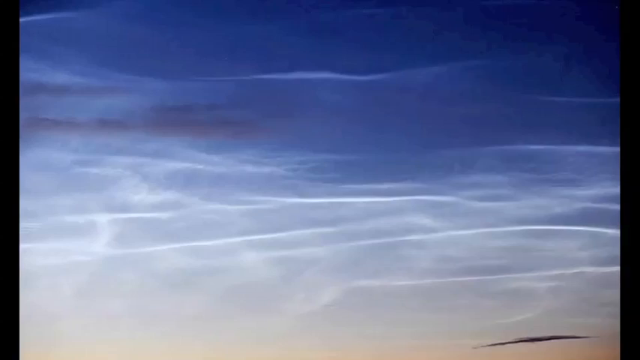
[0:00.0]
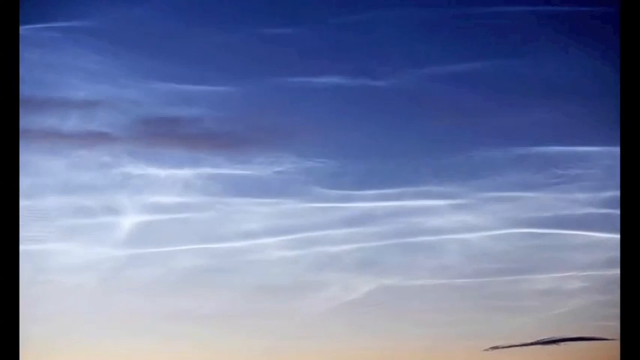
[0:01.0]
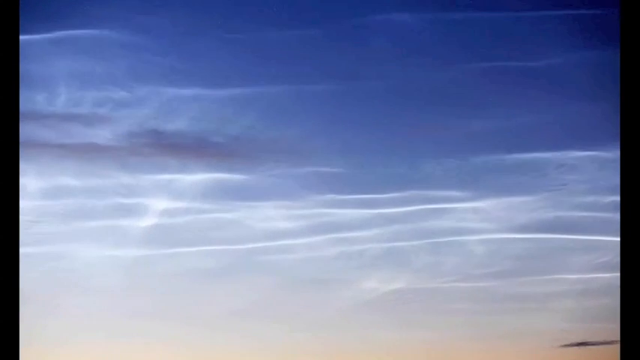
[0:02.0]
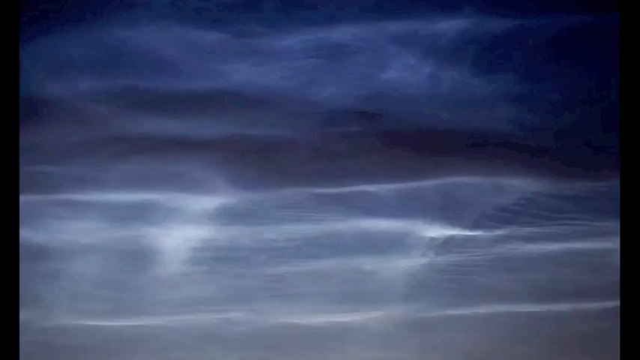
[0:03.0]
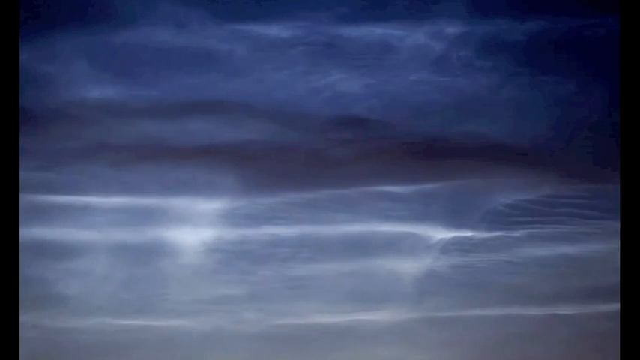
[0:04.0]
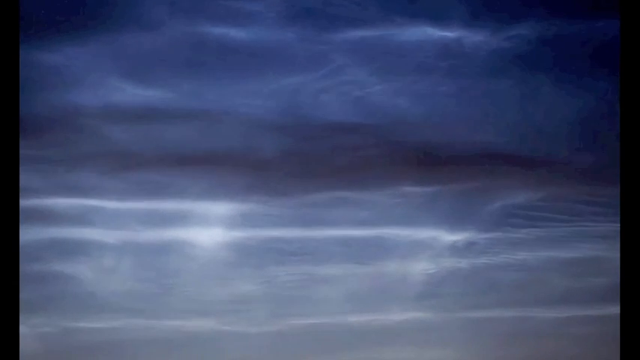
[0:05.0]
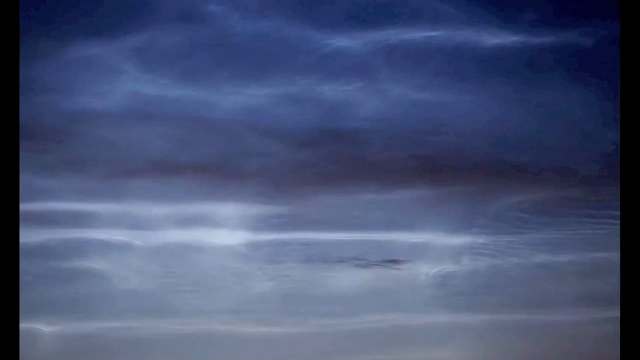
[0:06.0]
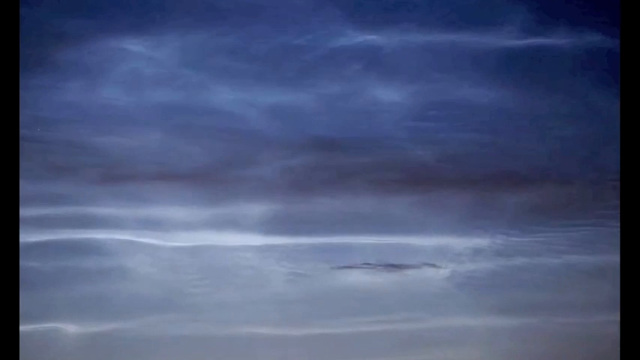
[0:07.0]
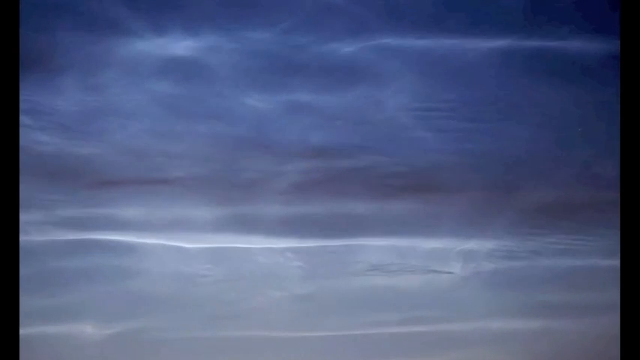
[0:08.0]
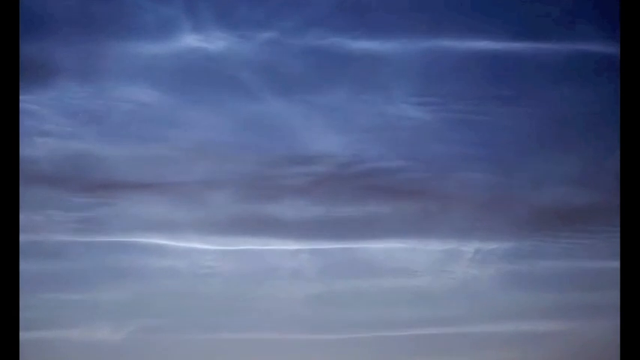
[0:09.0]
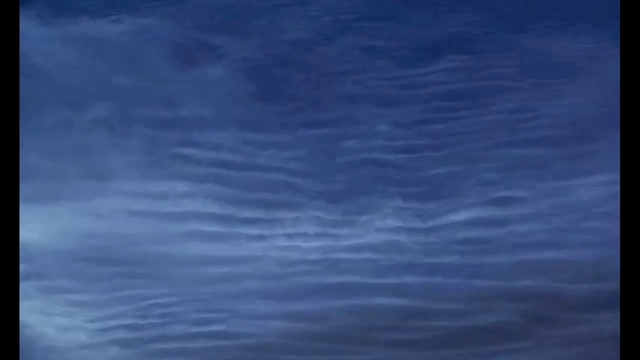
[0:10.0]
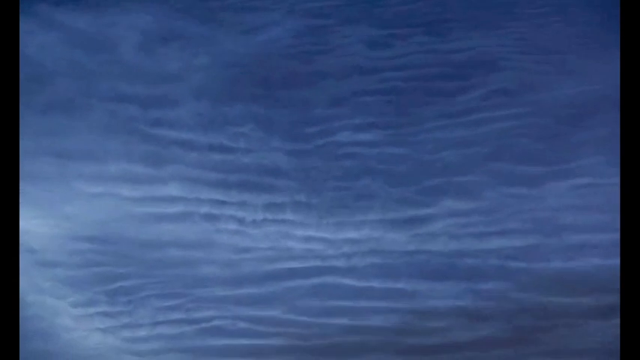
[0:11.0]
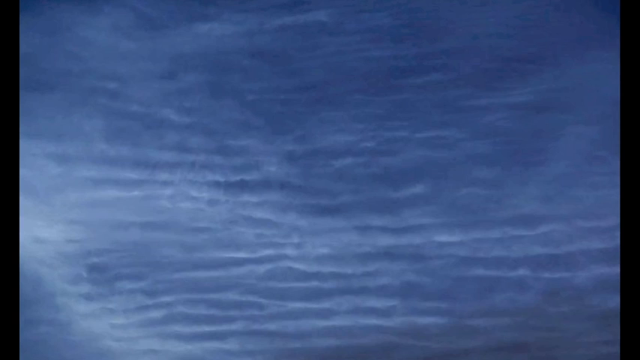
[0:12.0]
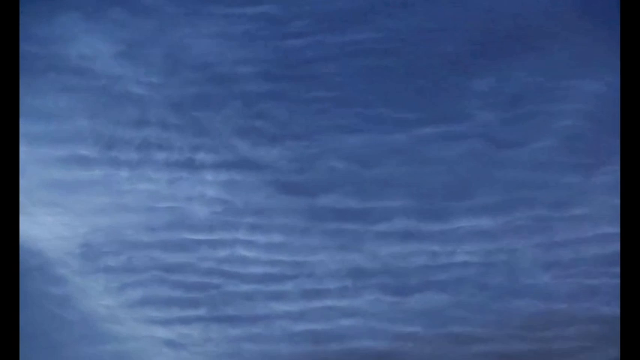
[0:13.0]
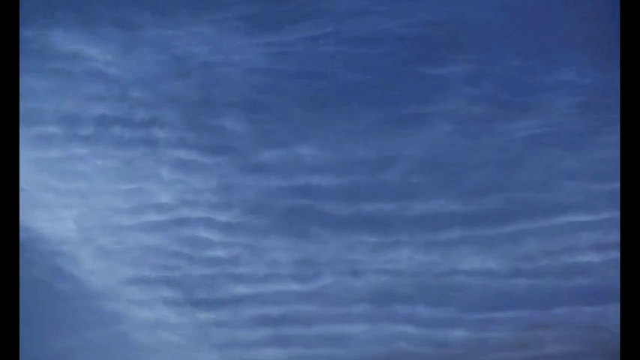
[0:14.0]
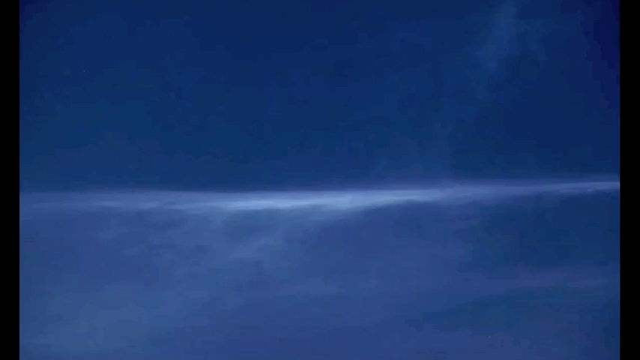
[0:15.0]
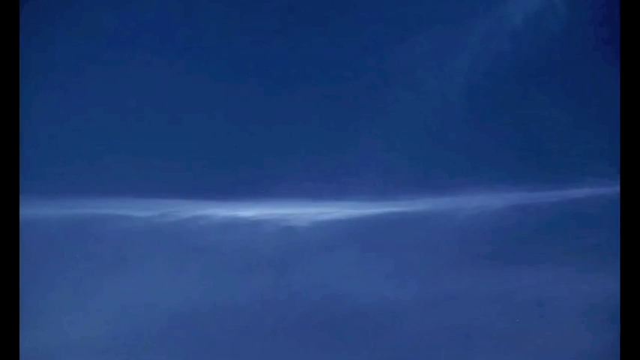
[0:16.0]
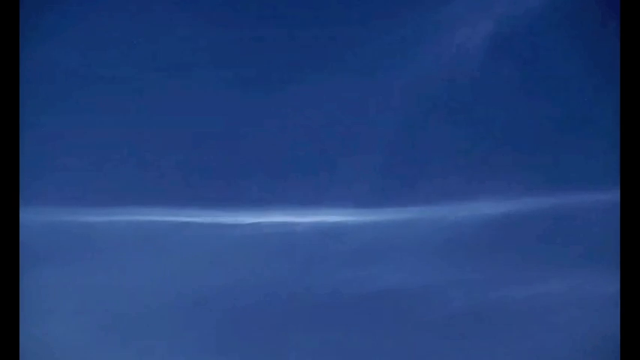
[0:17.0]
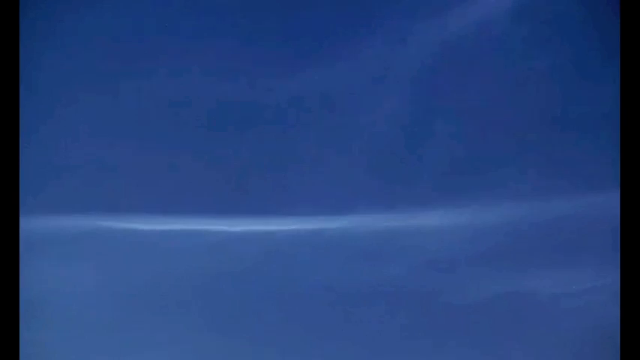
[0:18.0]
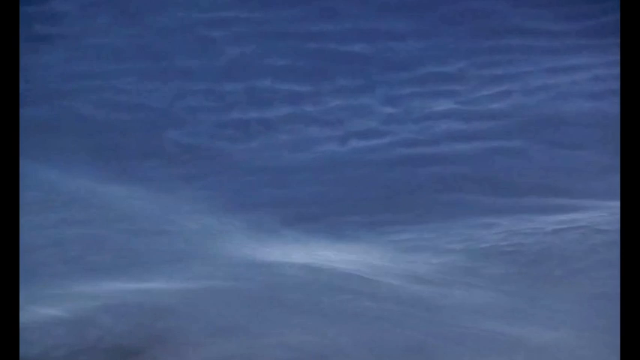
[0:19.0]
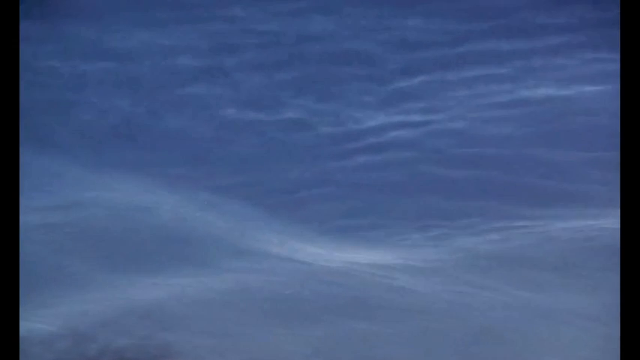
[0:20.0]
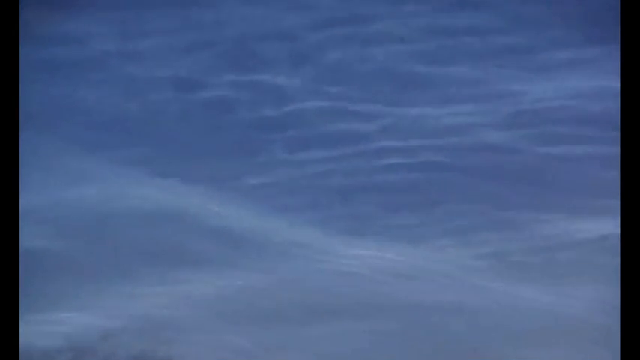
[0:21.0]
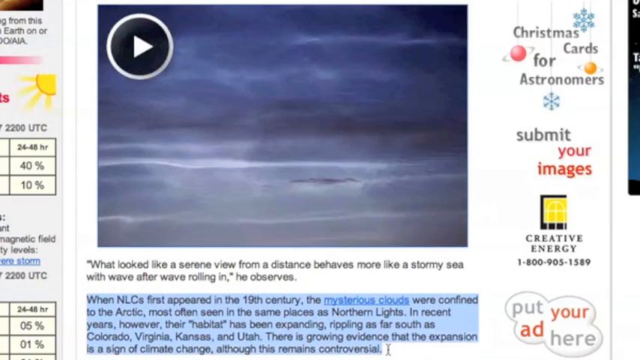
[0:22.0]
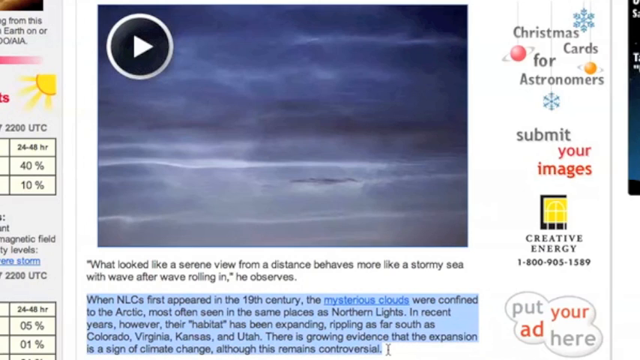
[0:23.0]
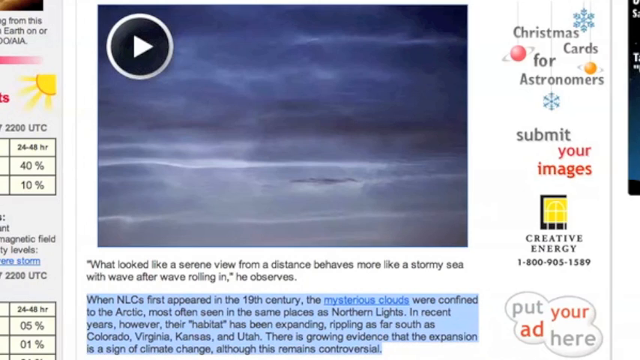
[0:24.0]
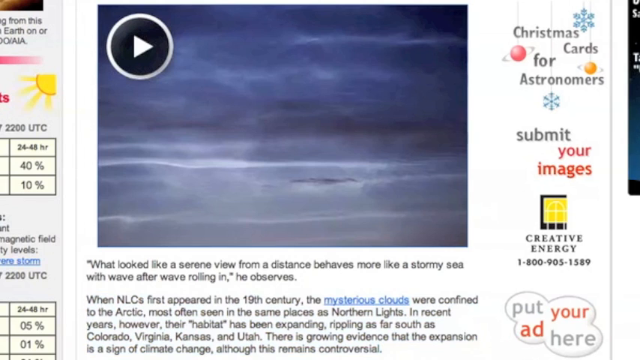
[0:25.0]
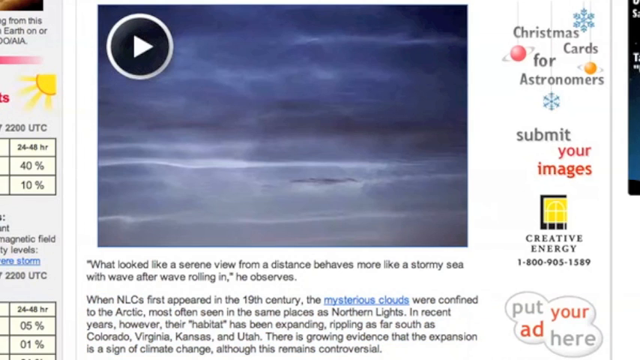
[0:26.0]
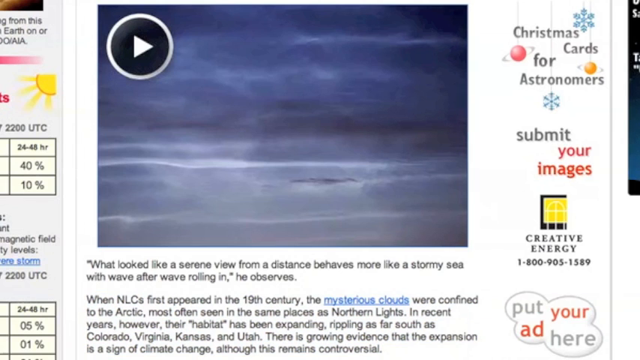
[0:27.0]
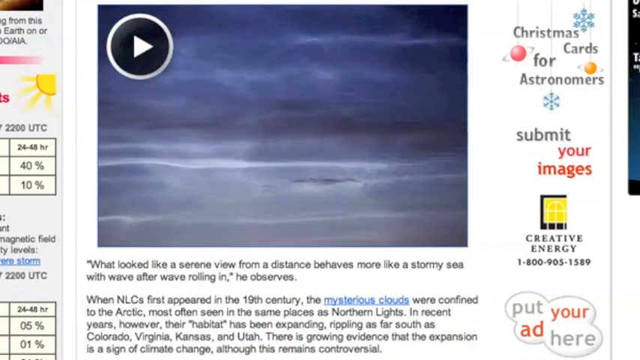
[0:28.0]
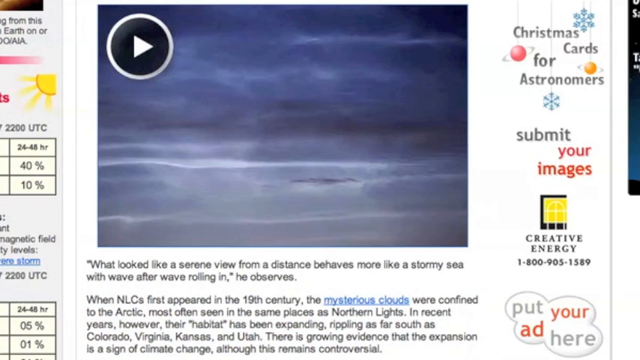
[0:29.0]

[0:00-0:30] What appears to be a slow-motion video shows what is possibly a water feature, perhaps the ocean or a swimming pool; it is hard to tell. Movement like ripples is visible against a blue background, suggesting an area of water. When the motion ends, the video settles on a white screen that seems to be a PowerPoint or computer presentation of some kind. The video appears at the top, with text below that reads "what looked like a serene view from a distance behaves more like a stormy sea with wave after wave rolling in, he observes."